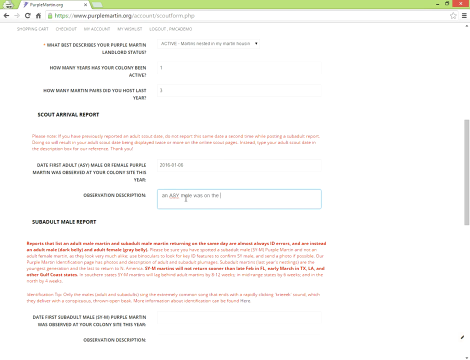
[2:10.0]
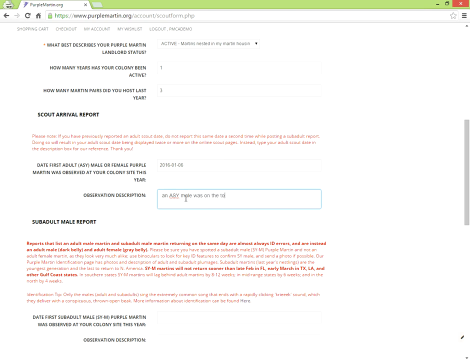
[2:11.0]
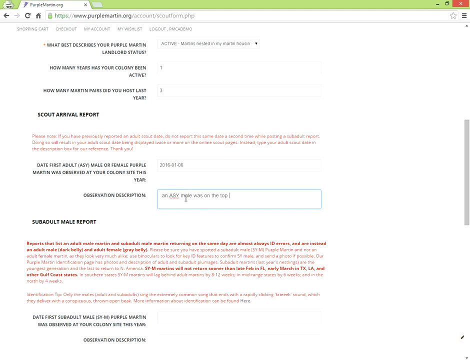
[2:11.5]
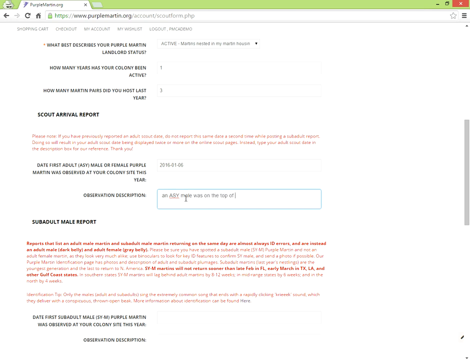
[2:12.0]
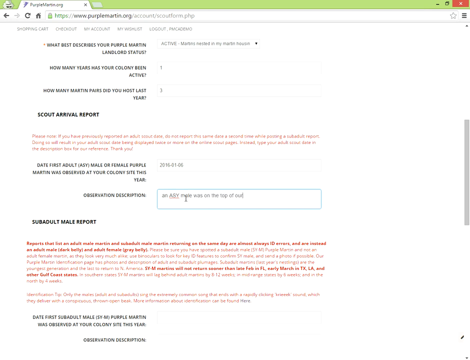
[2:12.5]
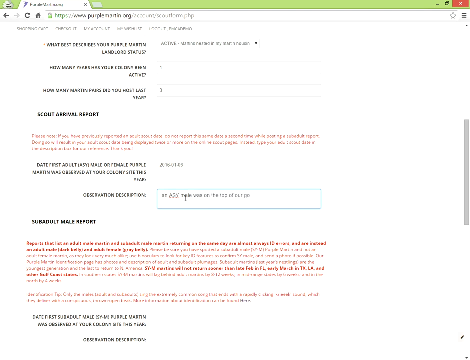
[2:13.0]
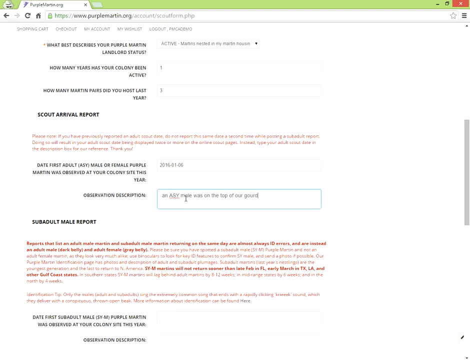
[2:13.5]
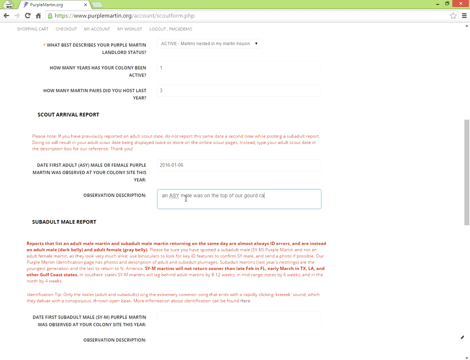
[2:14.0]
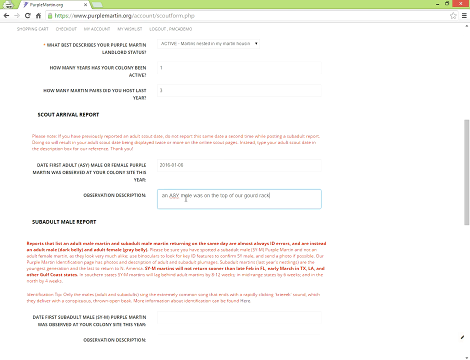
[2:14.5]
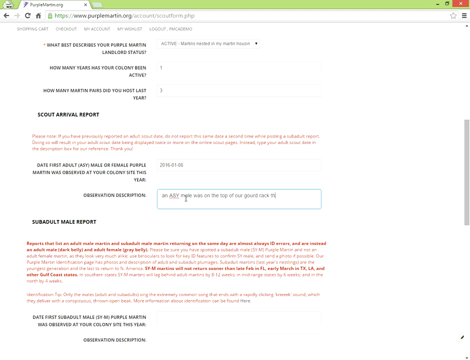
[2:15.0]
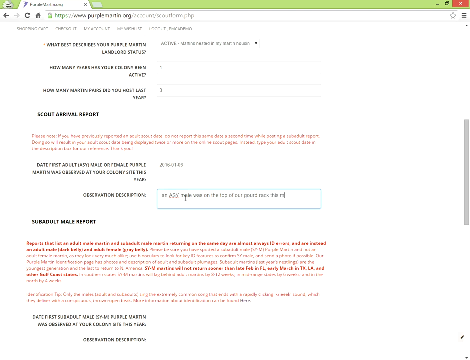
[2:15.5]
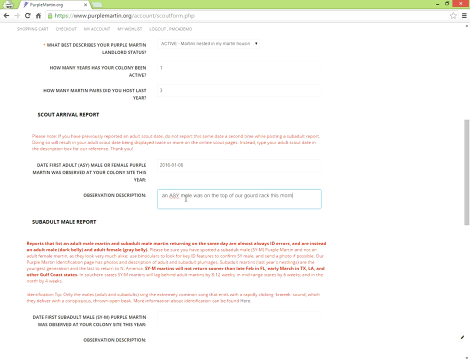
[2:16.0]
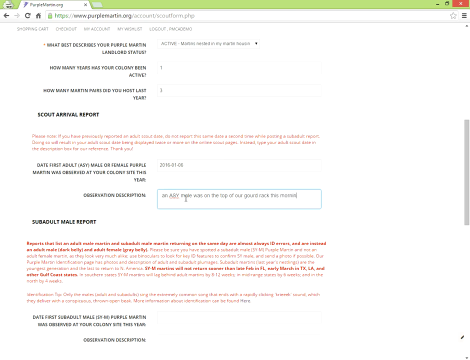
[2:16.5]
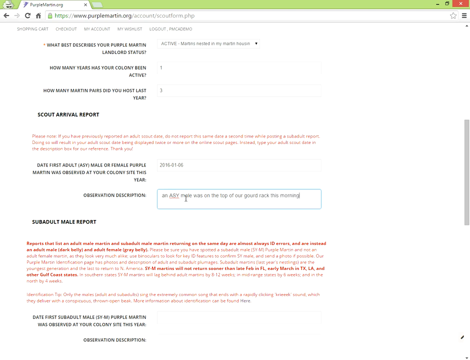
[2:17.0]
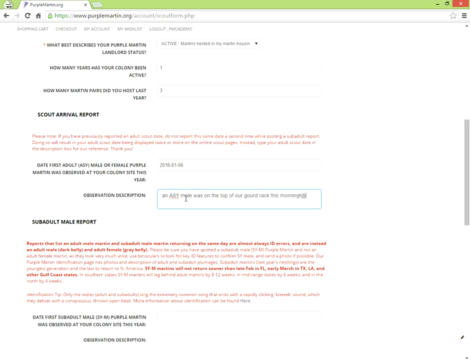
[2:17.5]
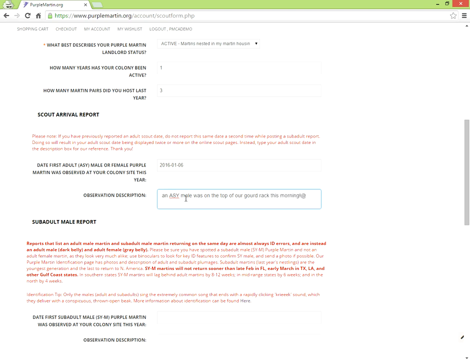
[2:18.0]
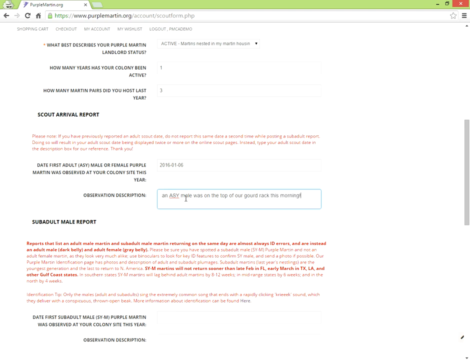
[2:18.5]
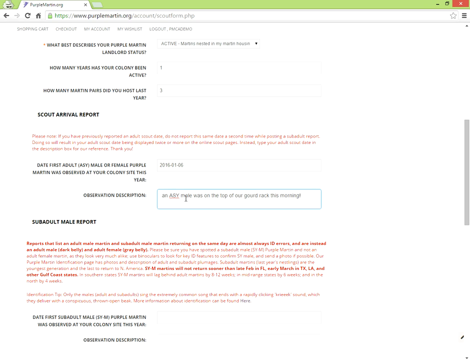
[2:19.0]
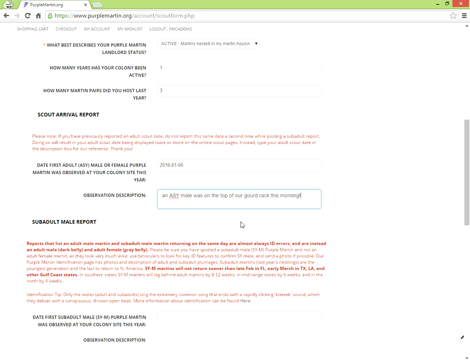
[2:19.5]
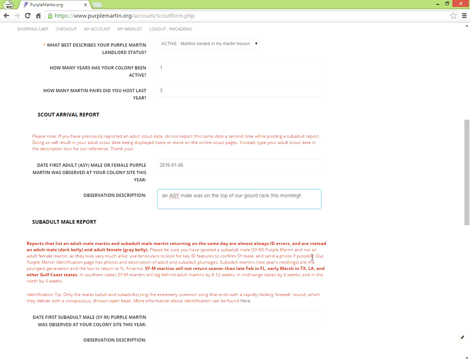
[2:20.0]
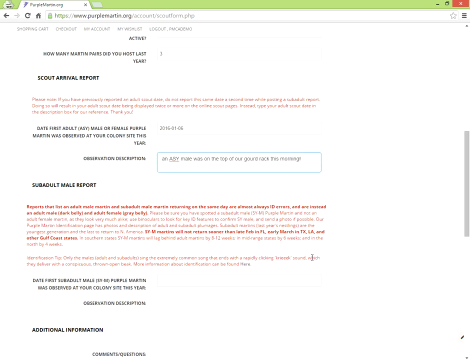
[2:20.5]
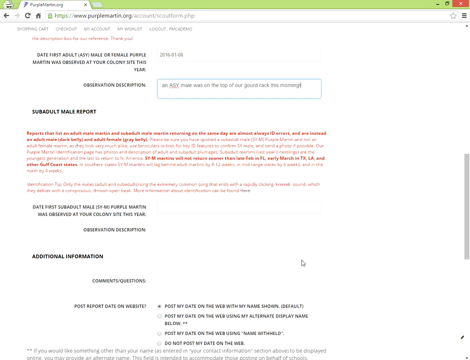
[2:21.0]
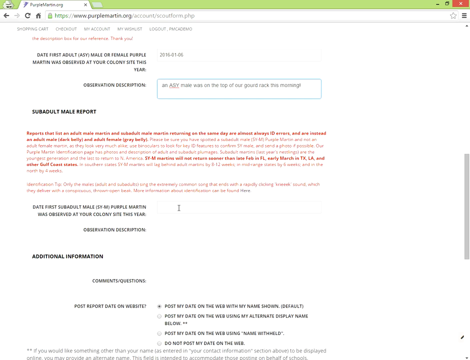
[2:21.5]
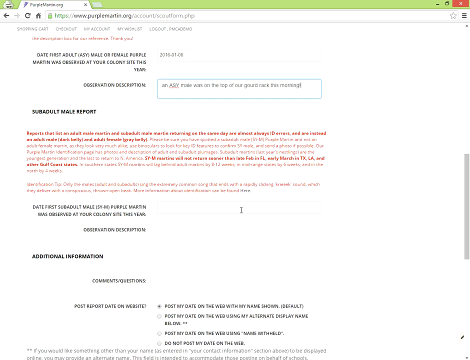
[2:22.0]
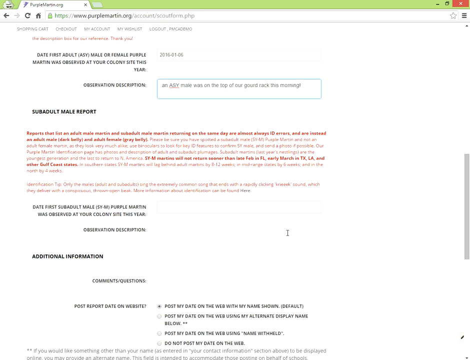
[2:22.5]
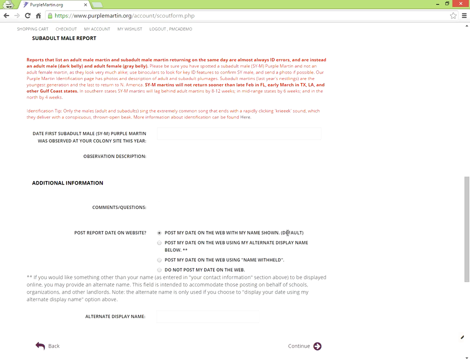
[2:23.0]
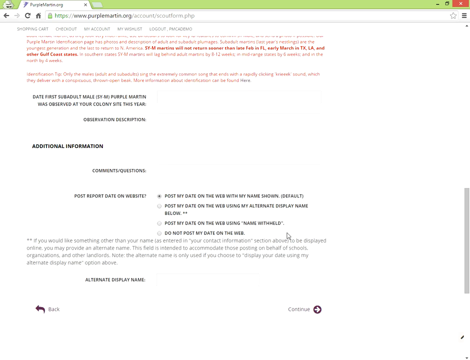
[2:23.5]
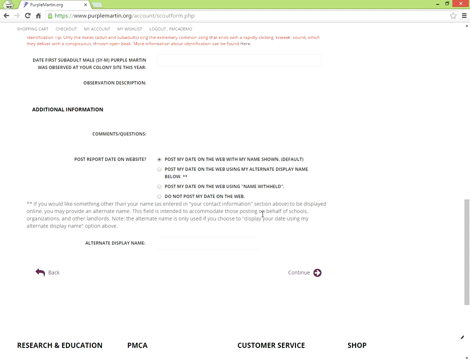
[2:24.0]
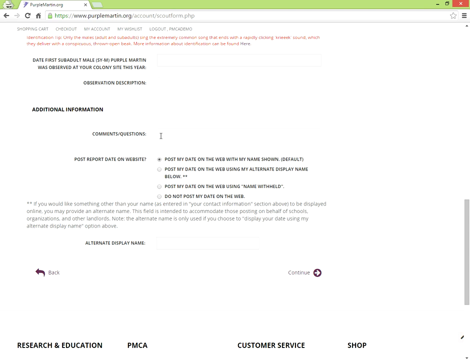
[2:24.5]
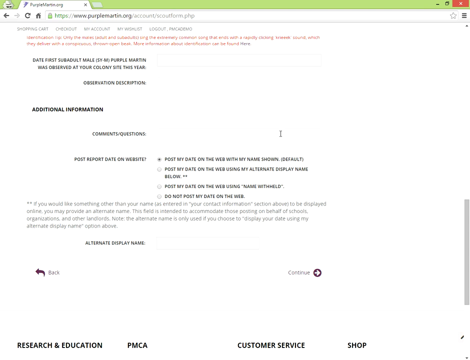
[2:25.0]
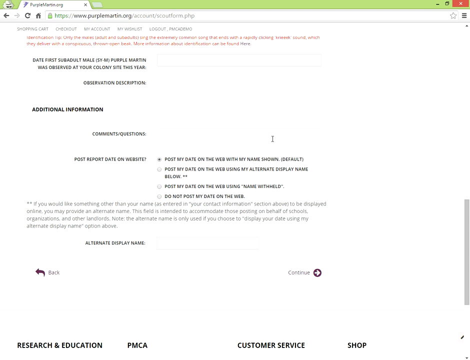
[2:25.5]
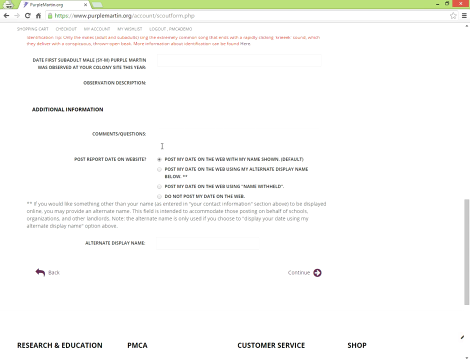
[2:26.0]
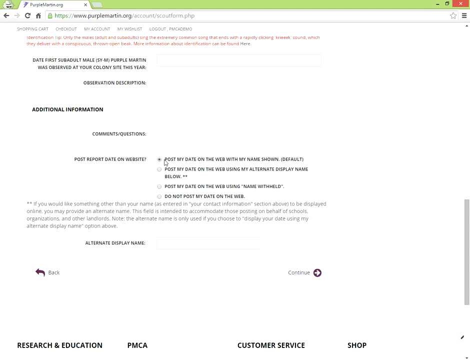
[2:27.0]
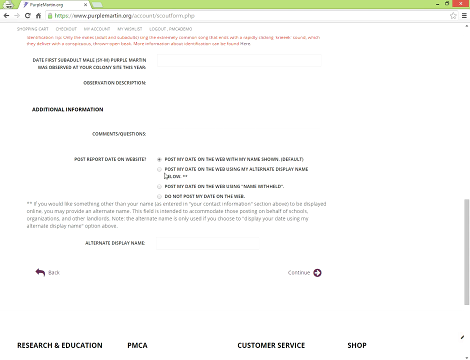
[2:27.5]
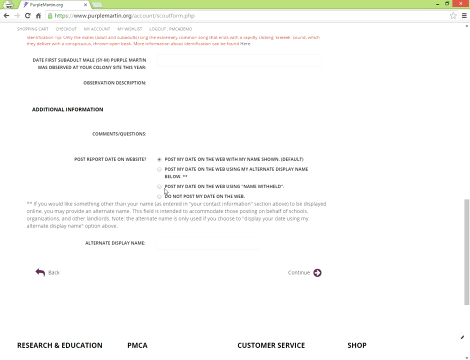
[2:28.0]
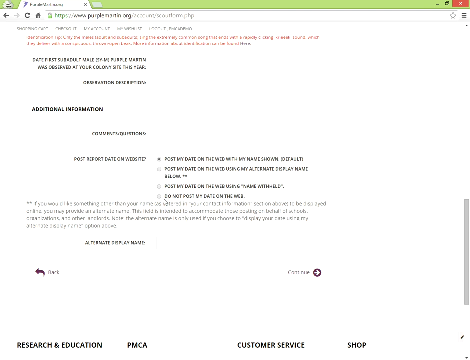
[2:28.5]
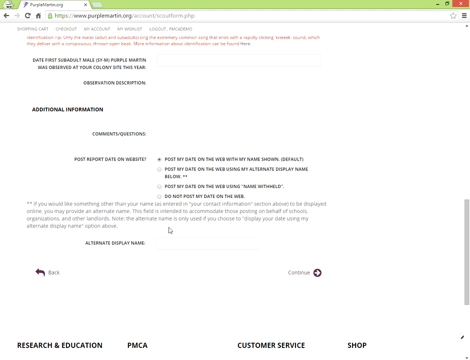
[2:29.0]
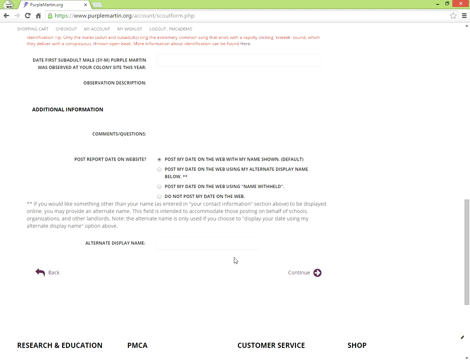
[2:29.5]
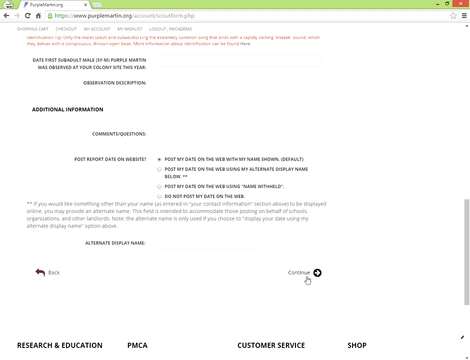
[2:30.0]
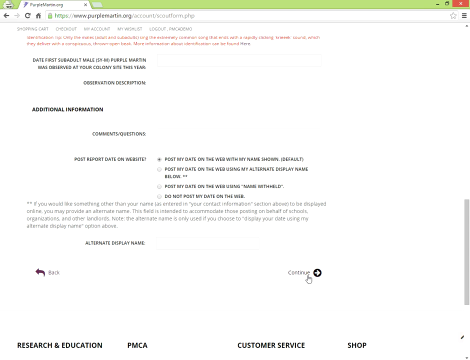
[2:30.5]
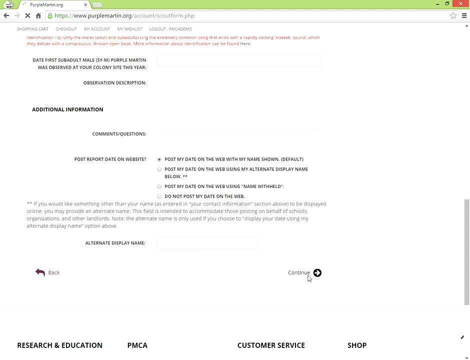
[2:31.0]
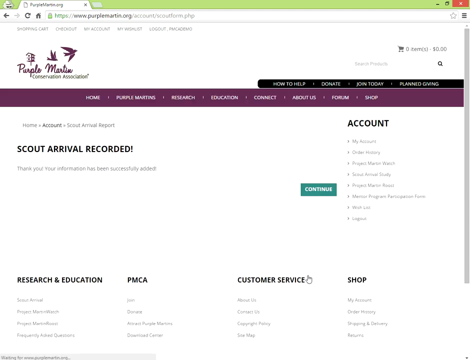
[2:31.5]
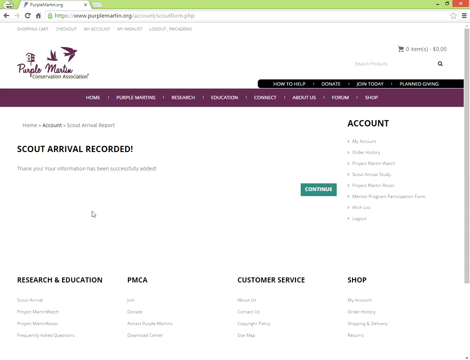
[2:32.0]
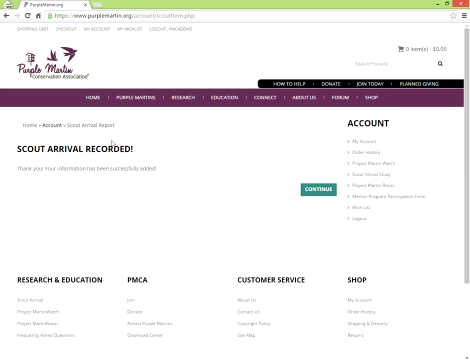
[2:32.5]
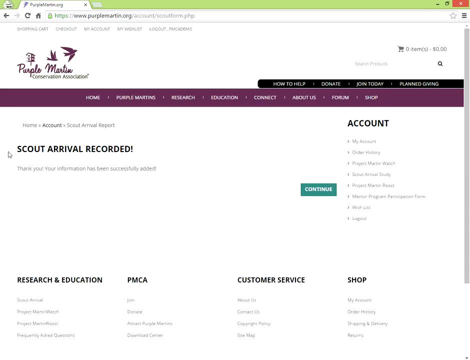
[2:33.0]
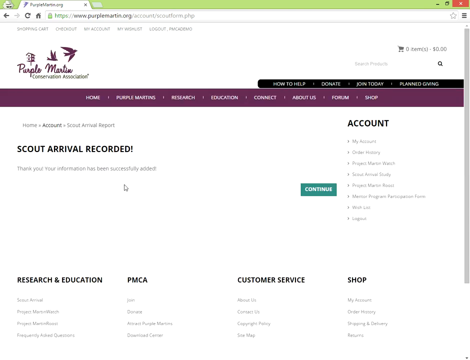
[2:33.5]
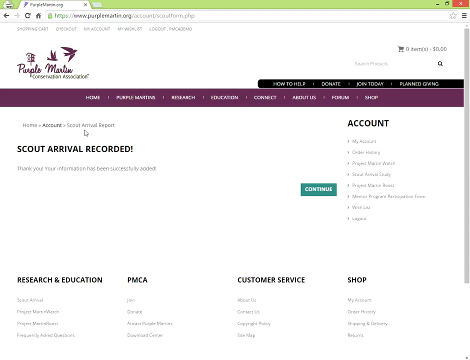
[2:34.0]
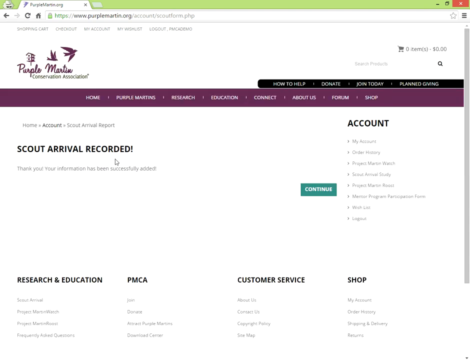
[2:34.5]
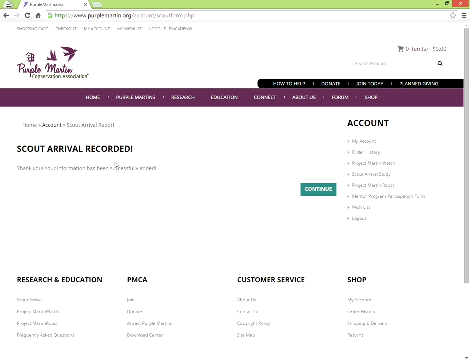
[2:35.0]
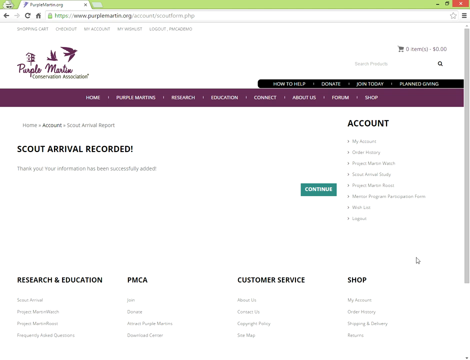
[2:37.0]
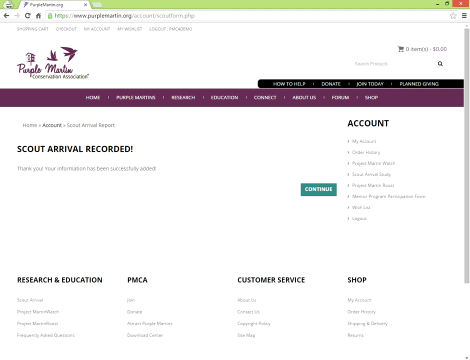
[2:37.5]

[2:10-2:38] Toward the bottom of the Scout Arrival Study form on the purplemartin.org website, the observation description box is being typed in, with the person writing where they saw the Purple Martin. Below it is the text "sub-adult male report", followed by two paragraphs of red text, some of it bold, which appears to be a disclaimer. The person scrolls down to the bottom of the page and clicks the submit button, which says "continue" with a purple arrow. A confirmation page appears that says "Scout arrival recorded!" The mouse cursor moves around the words to draw attention to them.